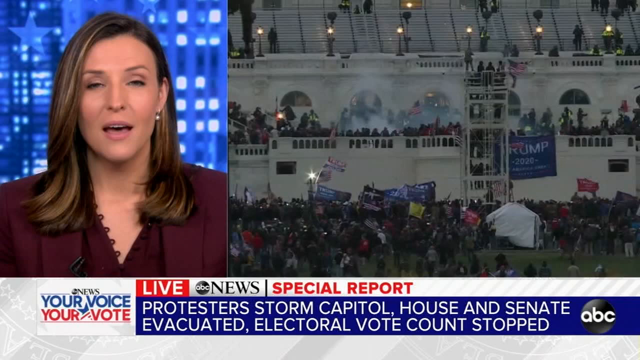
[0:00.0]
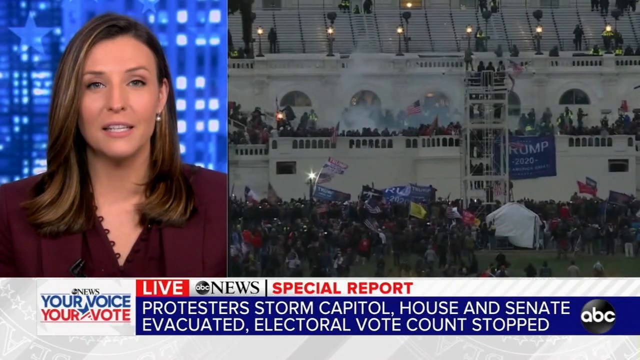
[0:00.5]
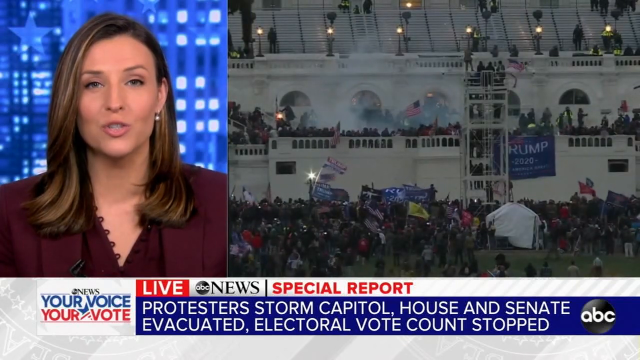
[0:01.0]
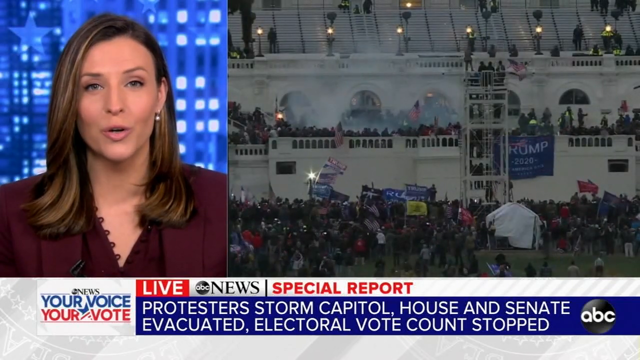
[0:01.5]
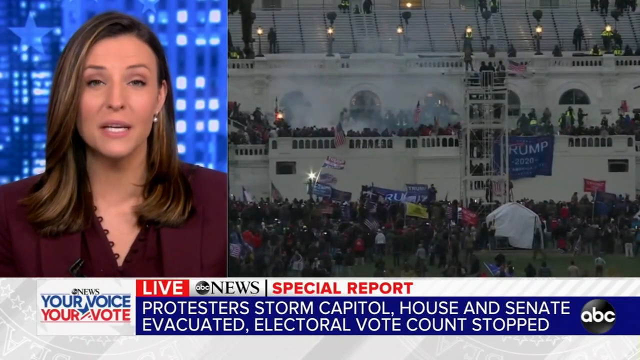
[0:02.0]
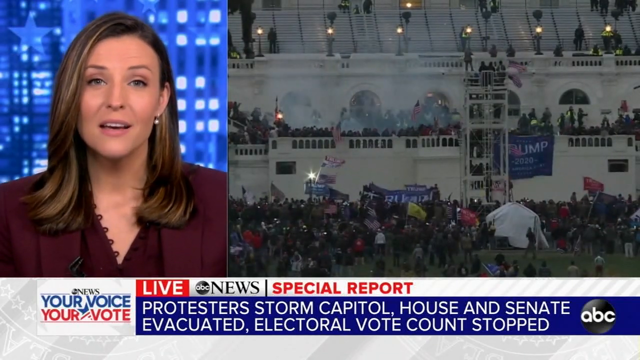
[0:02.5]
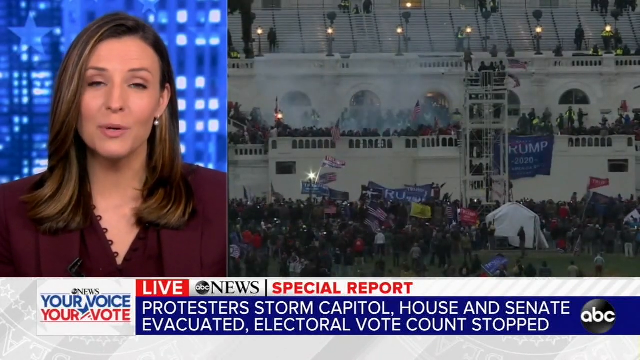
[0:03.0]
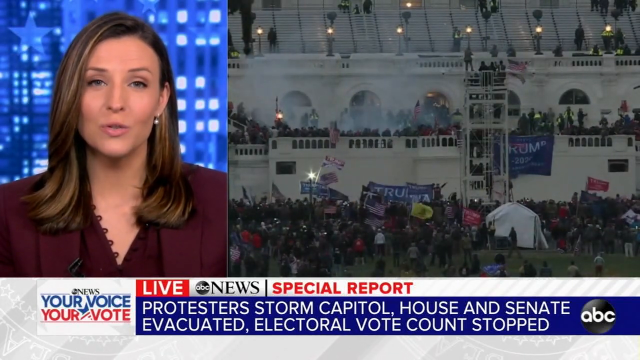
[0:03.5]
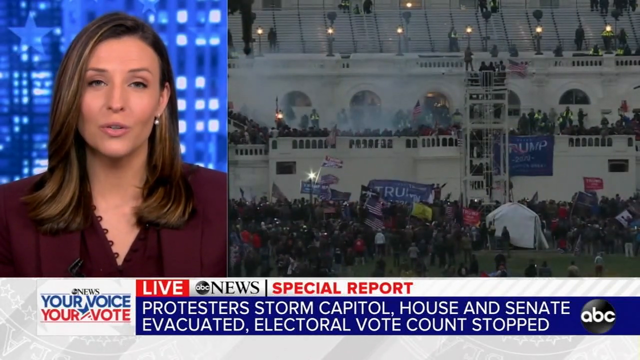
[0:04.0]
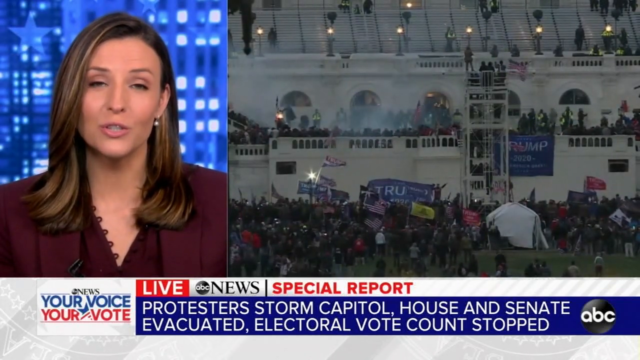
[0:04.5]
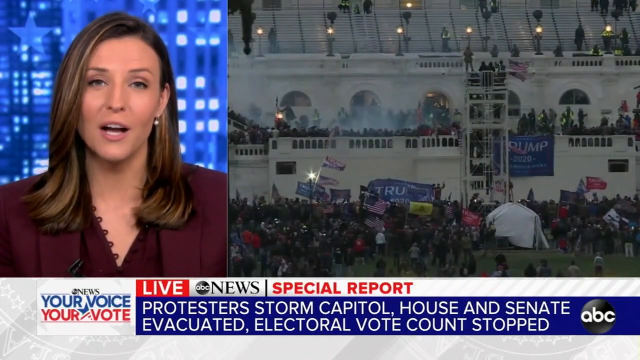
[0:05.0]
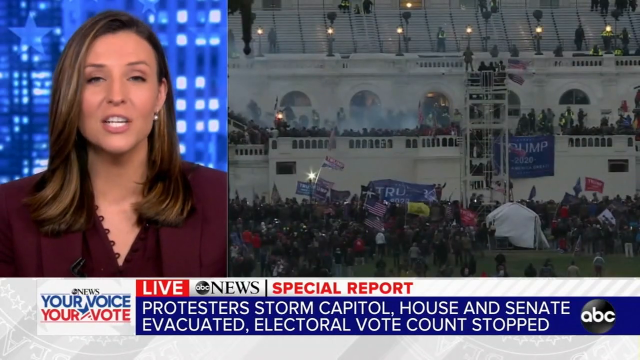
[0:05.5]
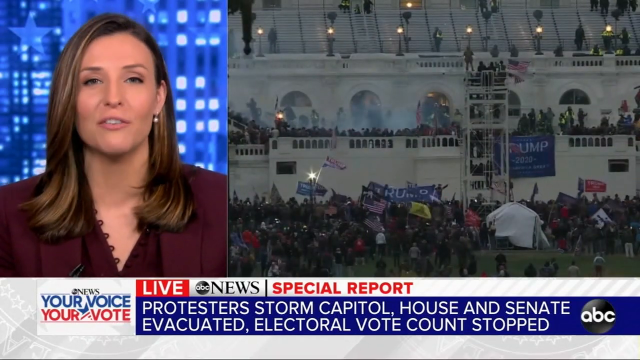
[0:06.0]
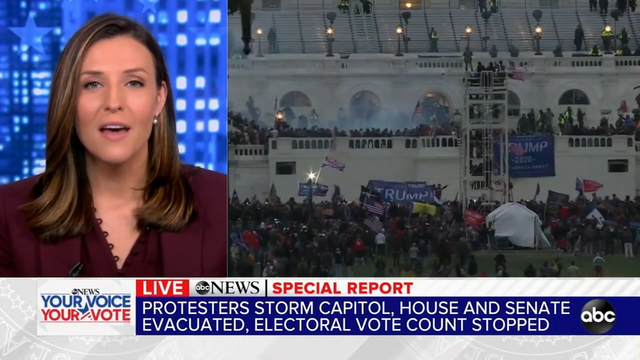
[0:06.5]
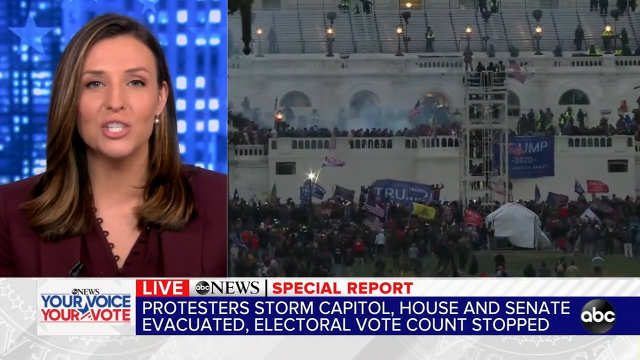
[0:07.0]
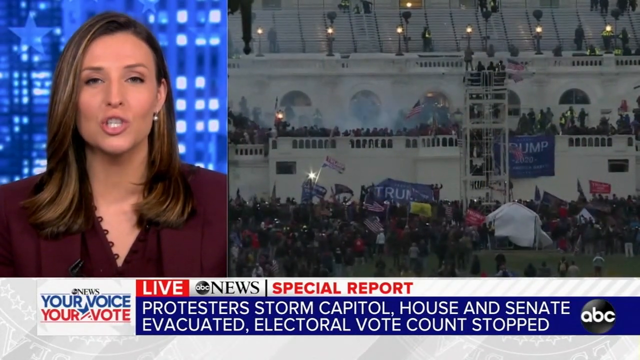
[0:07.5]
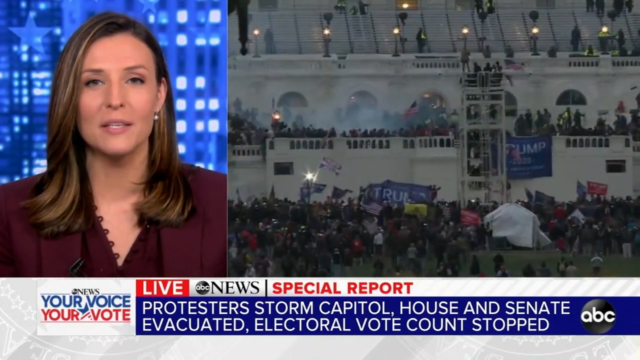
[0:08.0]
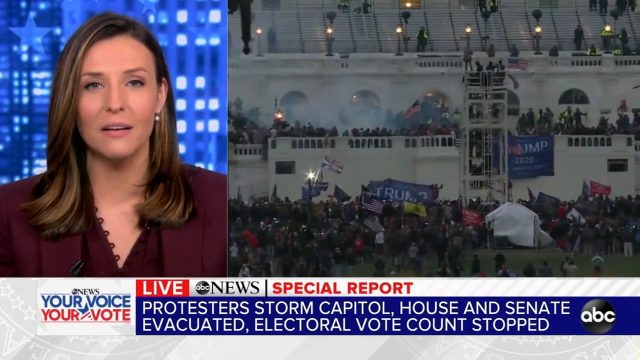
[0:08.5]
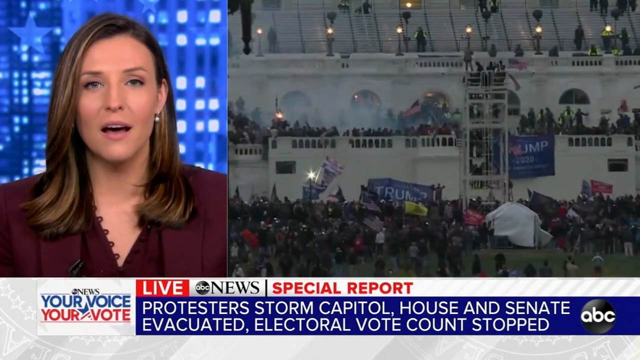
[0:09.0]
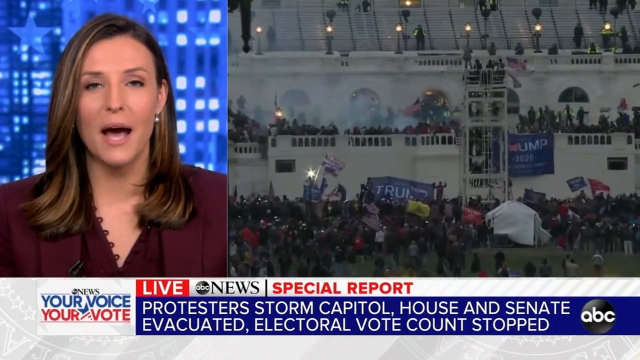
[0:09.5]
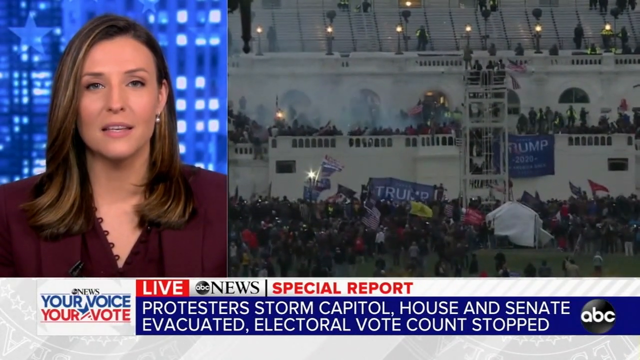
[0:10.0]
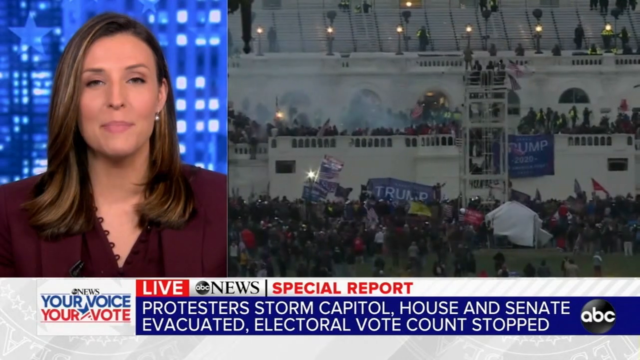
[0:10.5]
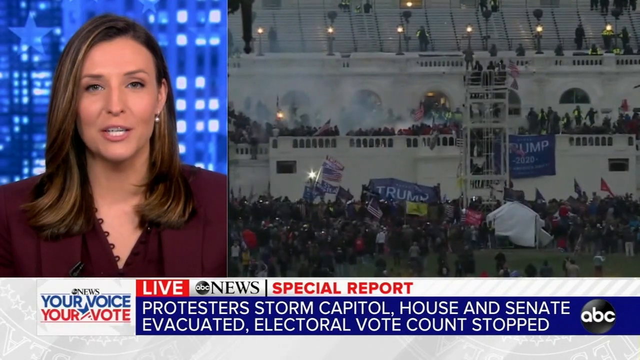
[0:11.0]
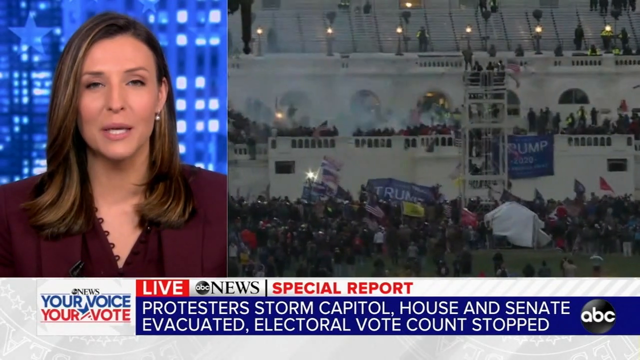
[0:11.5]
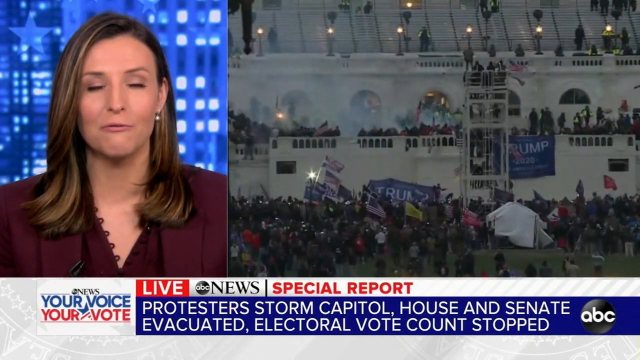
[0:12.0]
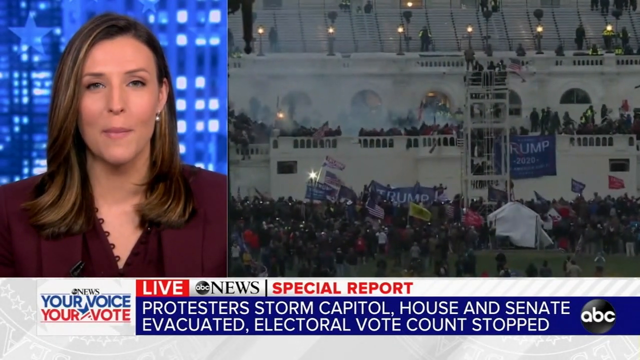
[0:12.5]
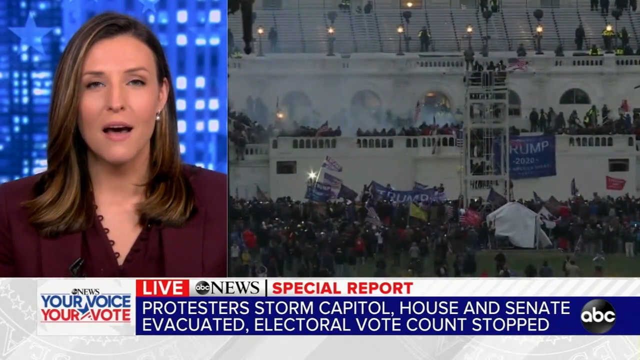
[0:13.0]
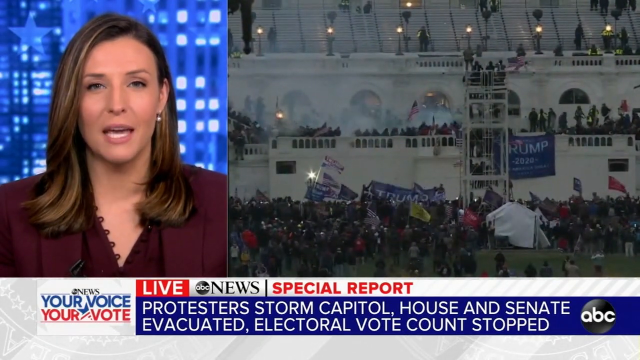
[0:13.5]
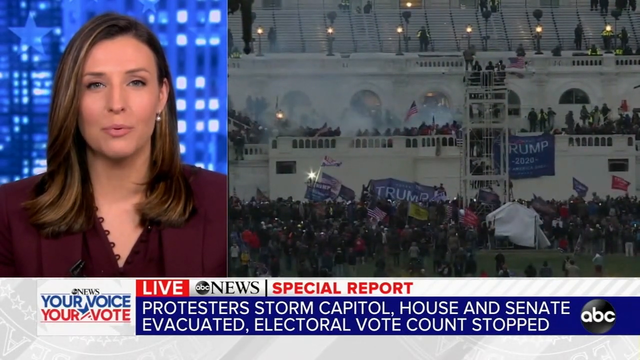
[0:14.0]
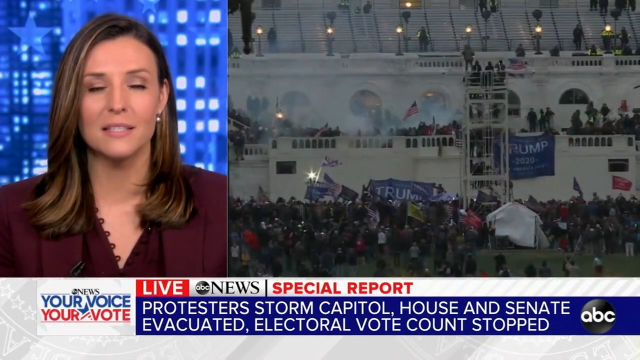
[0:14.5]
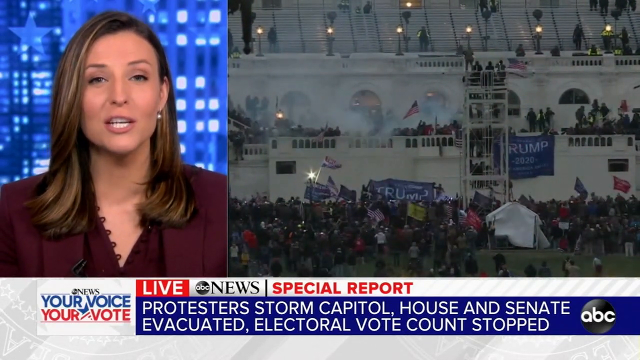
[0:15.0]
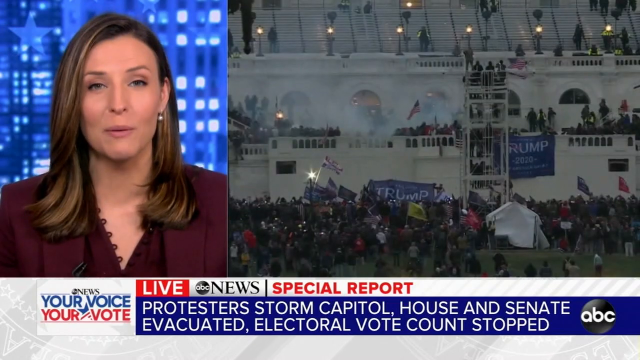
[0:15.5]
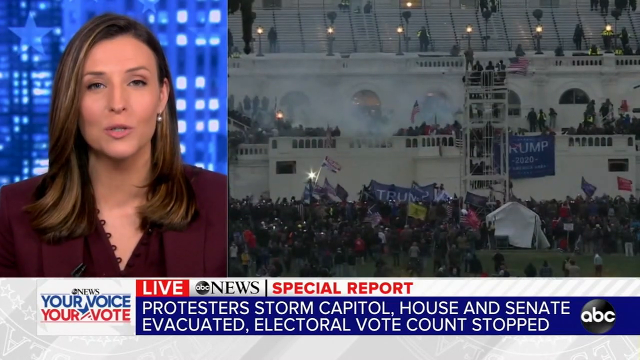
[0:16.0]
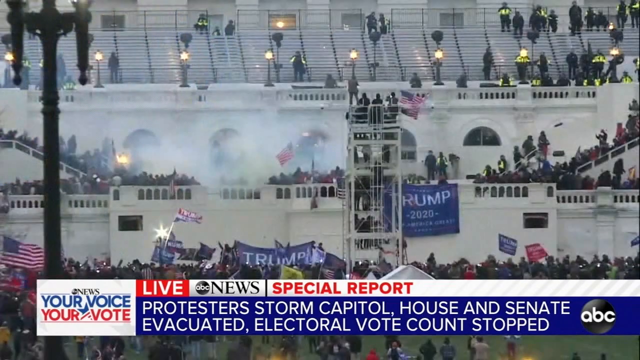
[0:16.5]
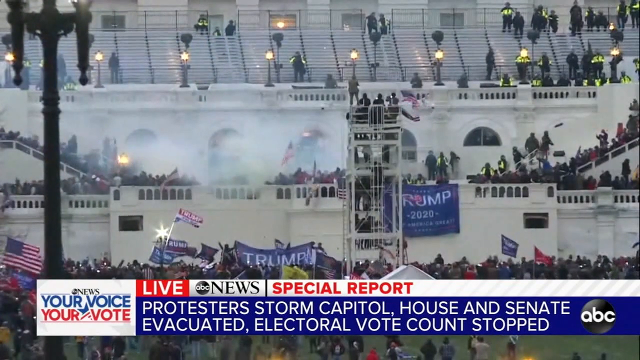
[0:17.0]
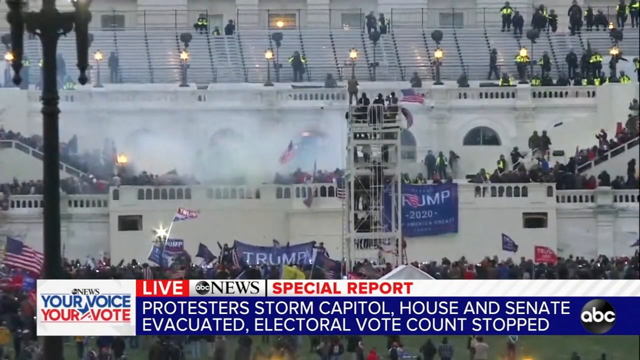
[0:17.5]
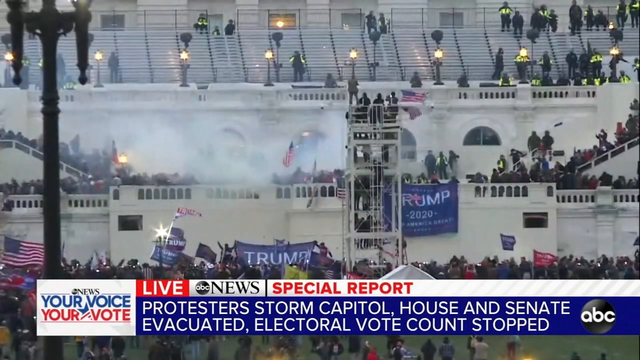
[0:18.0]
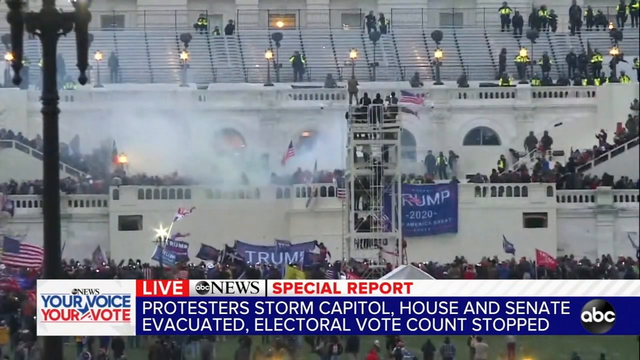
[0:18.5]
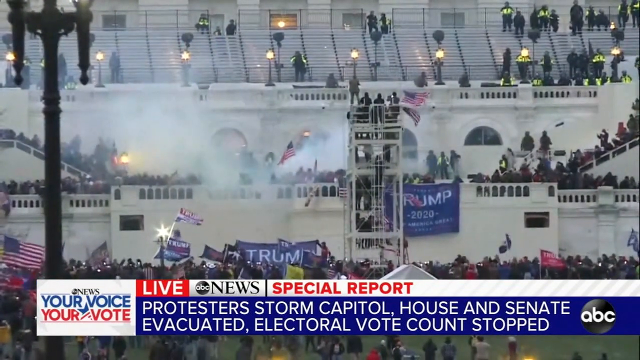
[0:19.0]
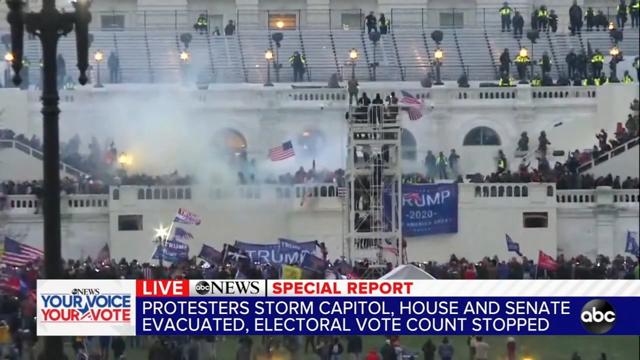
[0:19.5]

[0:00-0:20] A woman presents a live broadcast news report from the Voice News. A headline about protests appears on screen. People are protesting and holding cards and postcards; they are furious and angry, showing their frustration at the result of the vote. Another journalist is at the scene of the protest.